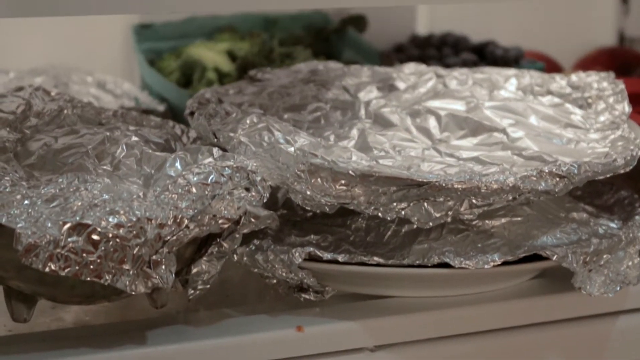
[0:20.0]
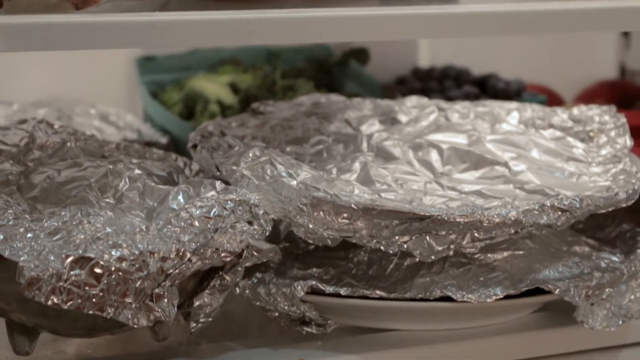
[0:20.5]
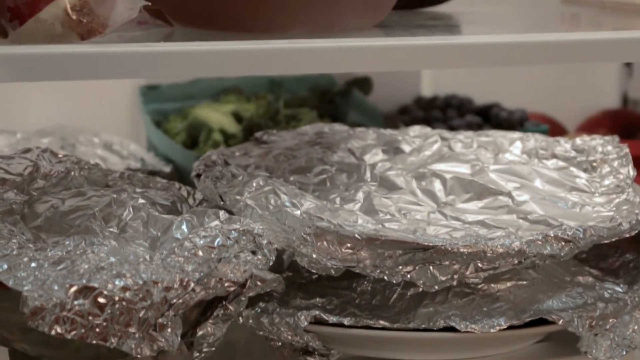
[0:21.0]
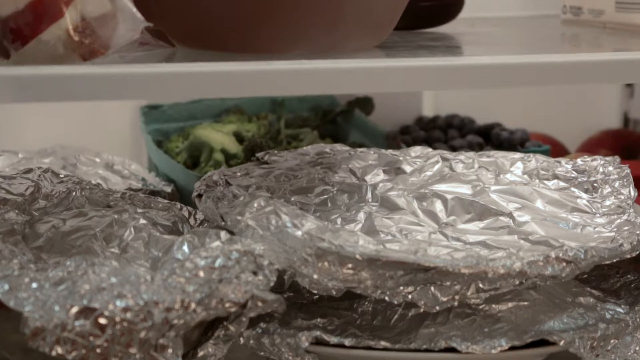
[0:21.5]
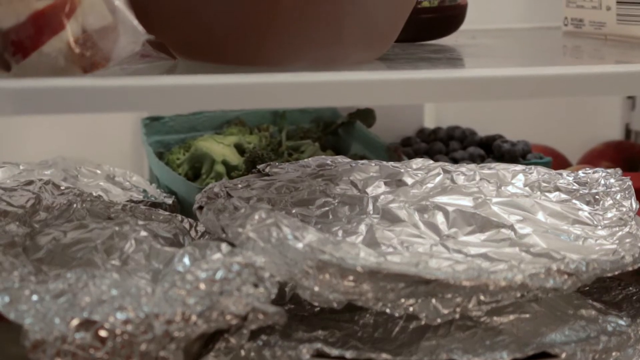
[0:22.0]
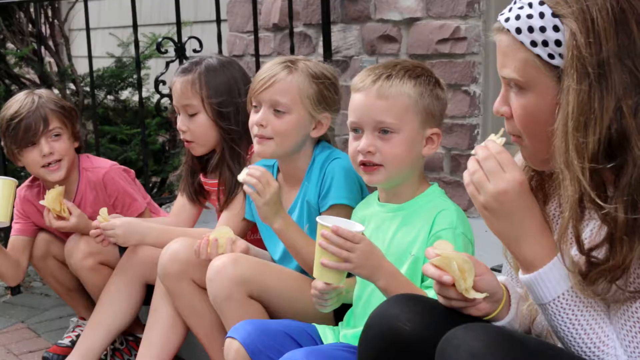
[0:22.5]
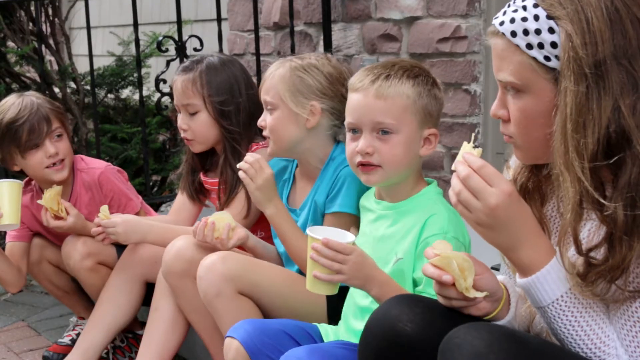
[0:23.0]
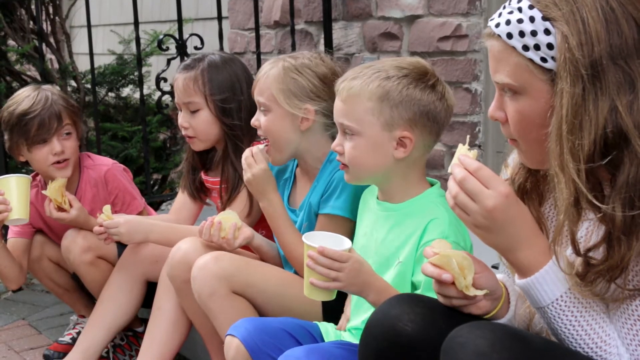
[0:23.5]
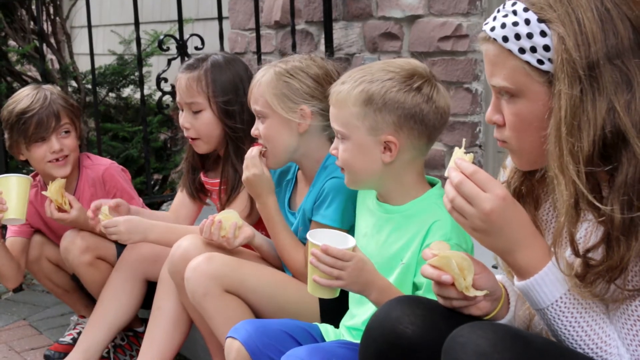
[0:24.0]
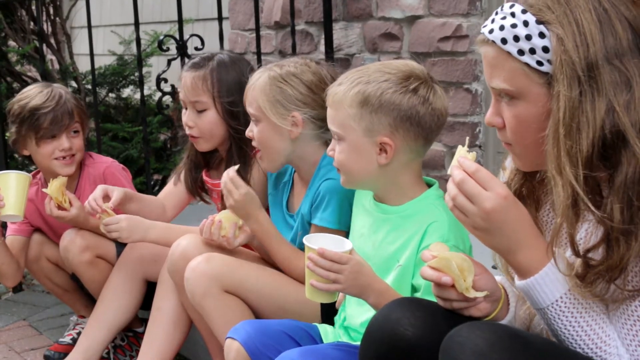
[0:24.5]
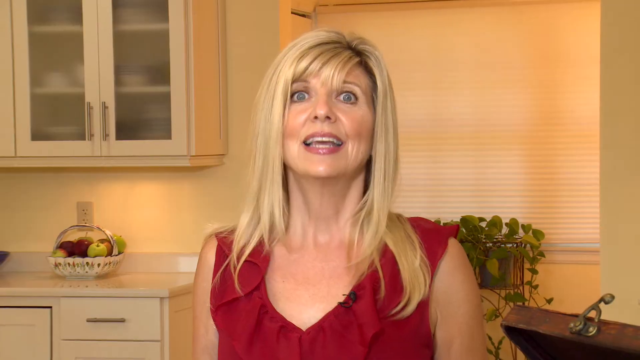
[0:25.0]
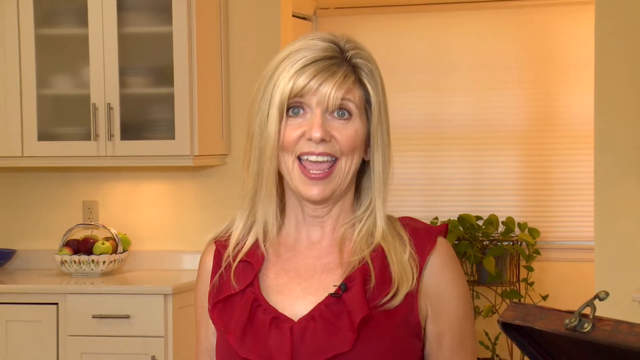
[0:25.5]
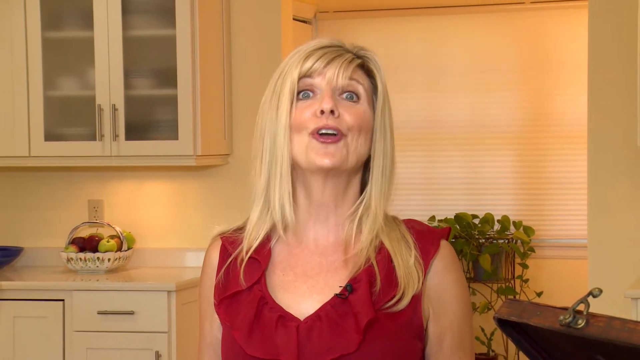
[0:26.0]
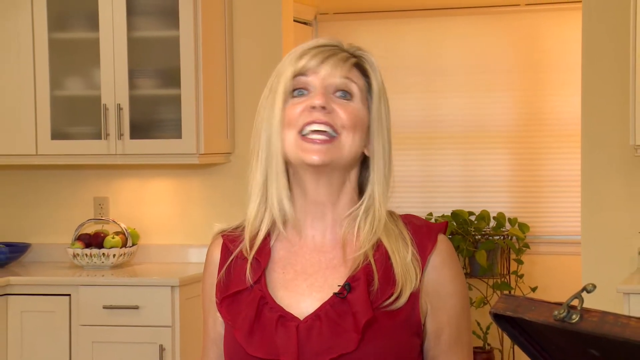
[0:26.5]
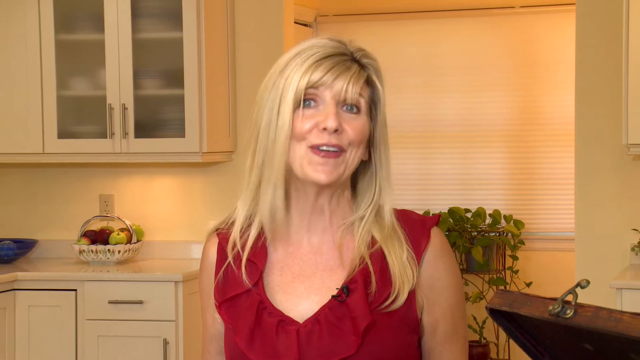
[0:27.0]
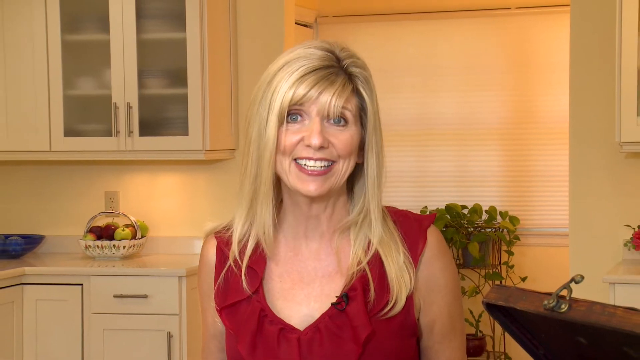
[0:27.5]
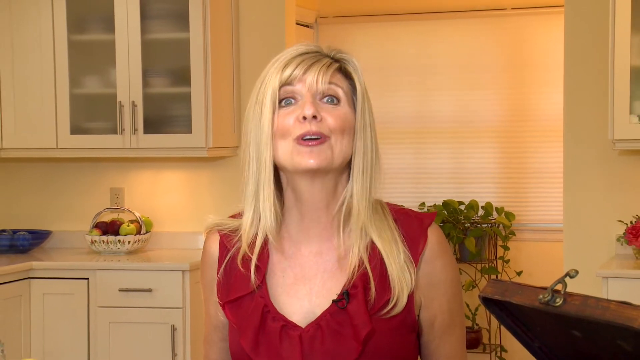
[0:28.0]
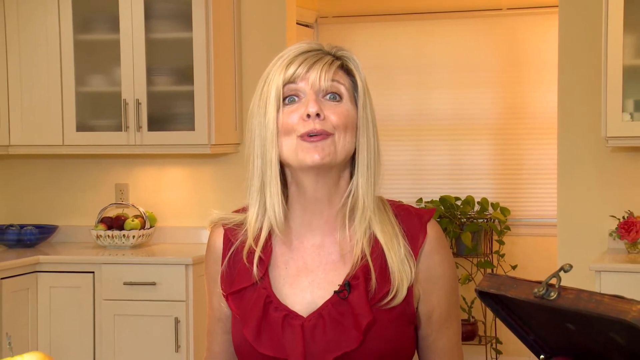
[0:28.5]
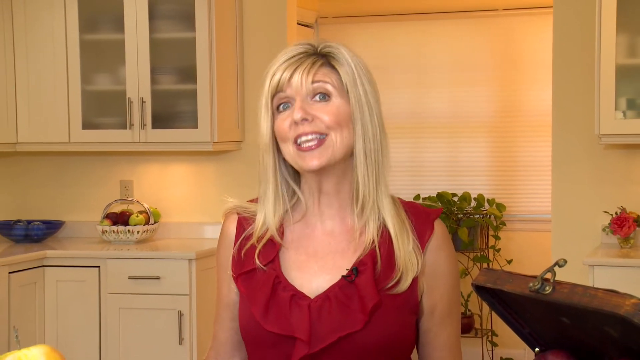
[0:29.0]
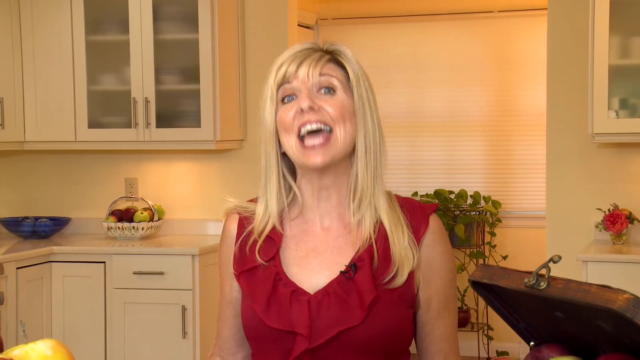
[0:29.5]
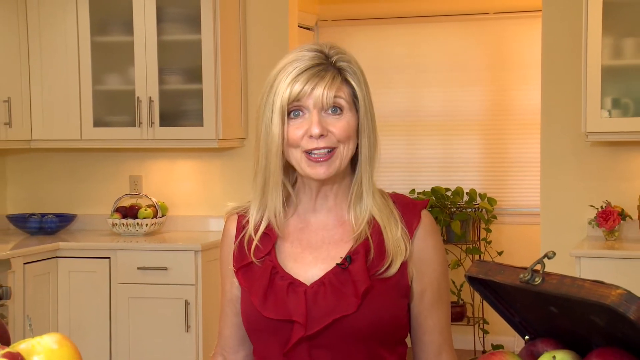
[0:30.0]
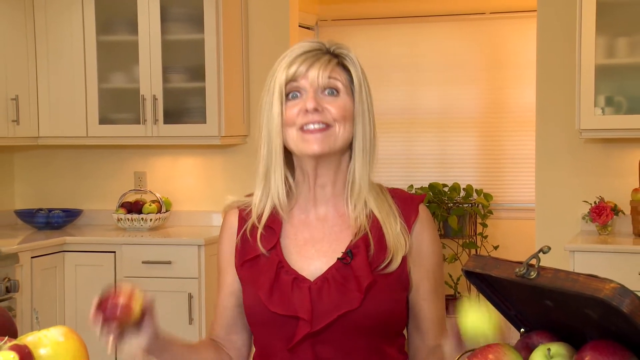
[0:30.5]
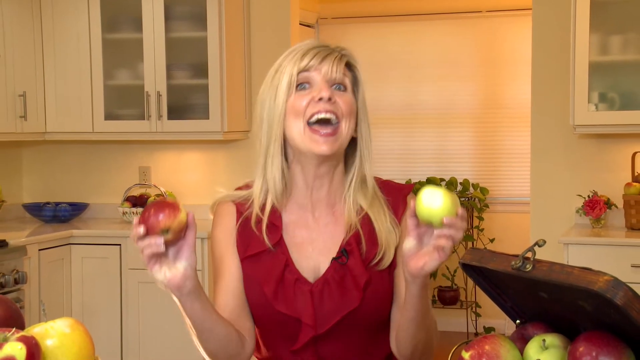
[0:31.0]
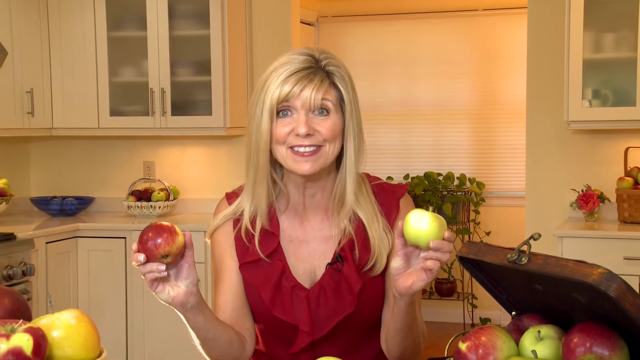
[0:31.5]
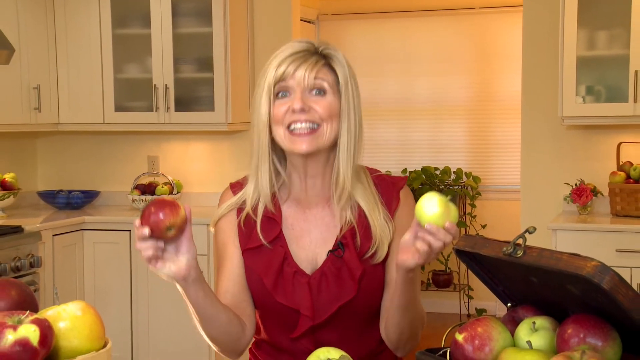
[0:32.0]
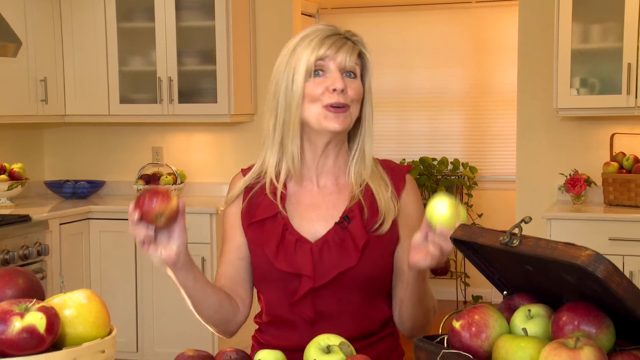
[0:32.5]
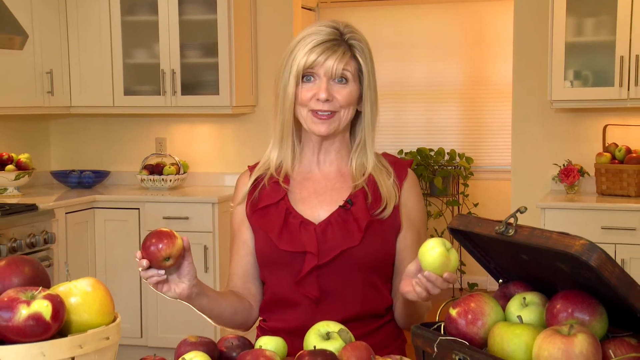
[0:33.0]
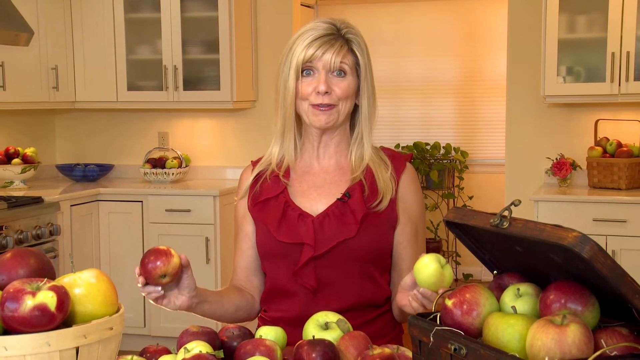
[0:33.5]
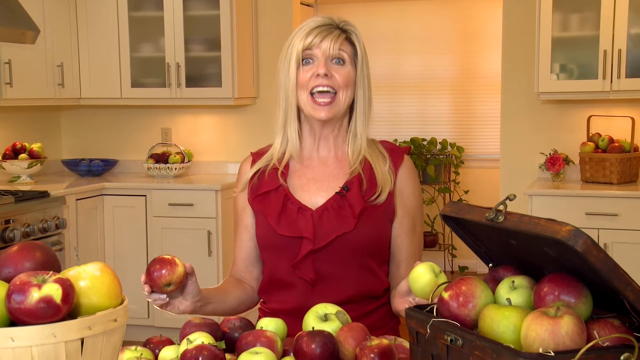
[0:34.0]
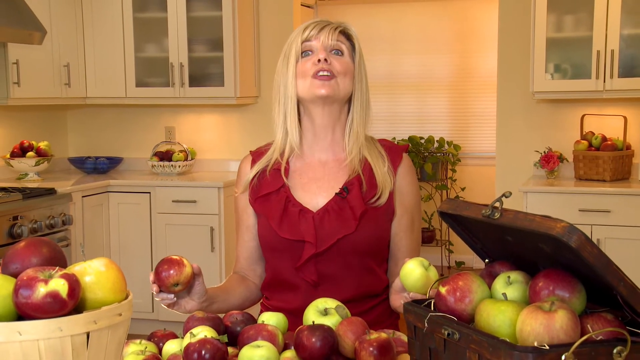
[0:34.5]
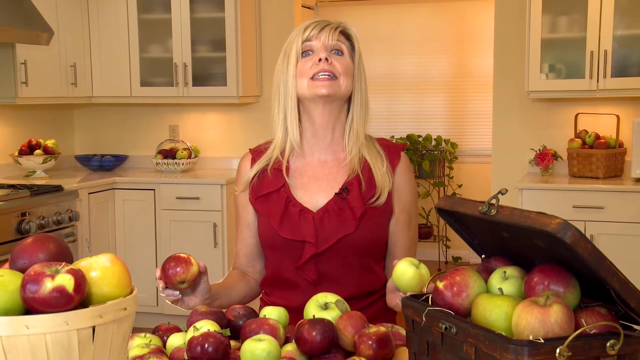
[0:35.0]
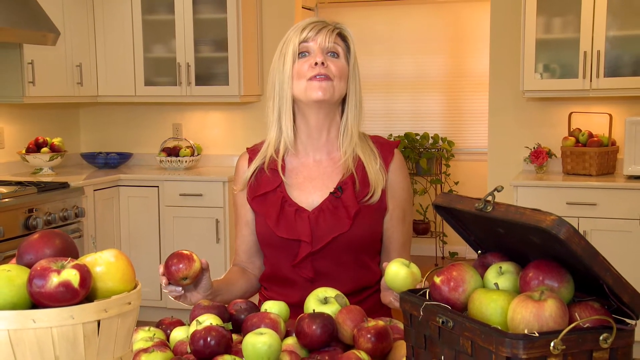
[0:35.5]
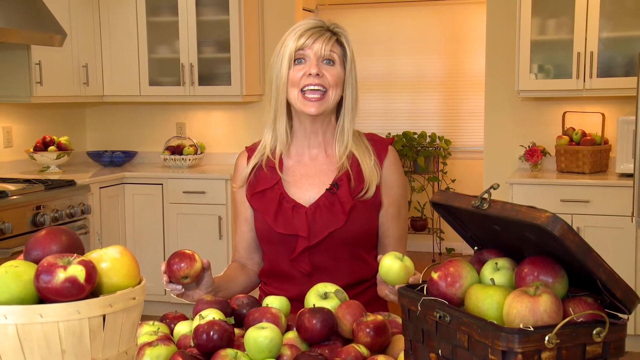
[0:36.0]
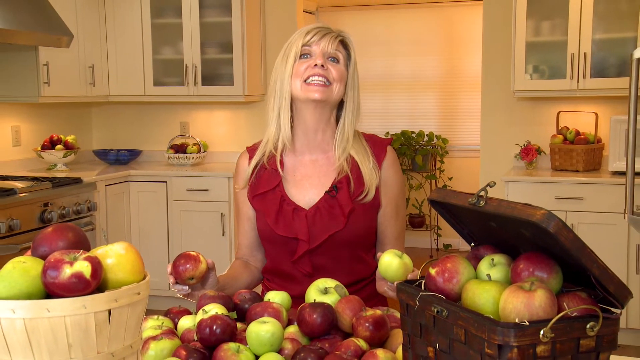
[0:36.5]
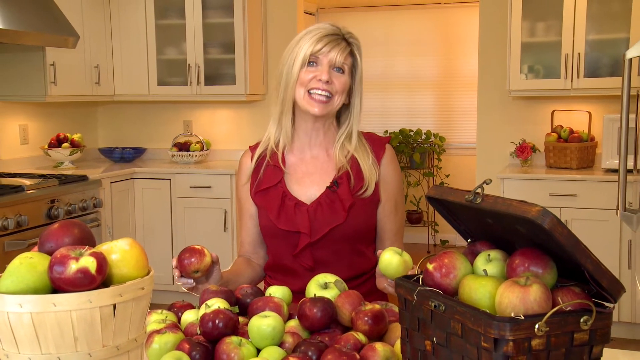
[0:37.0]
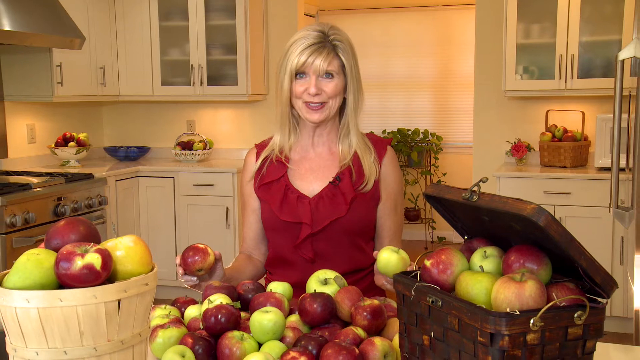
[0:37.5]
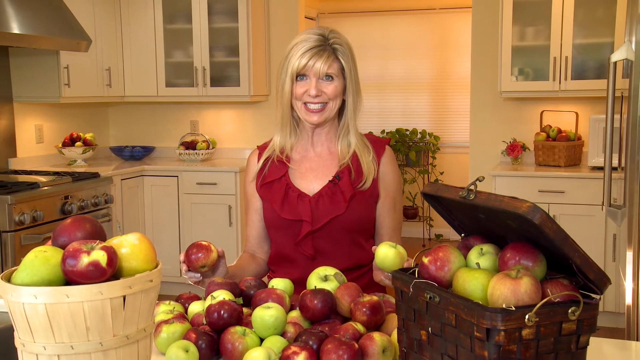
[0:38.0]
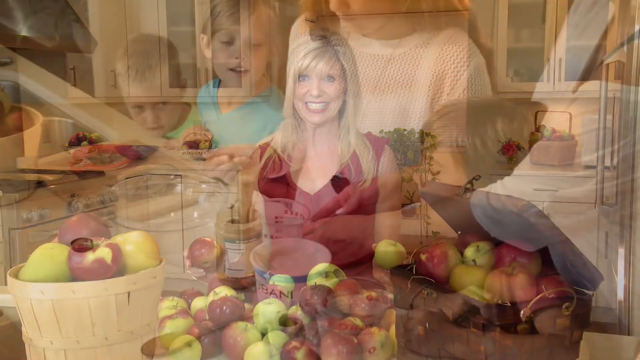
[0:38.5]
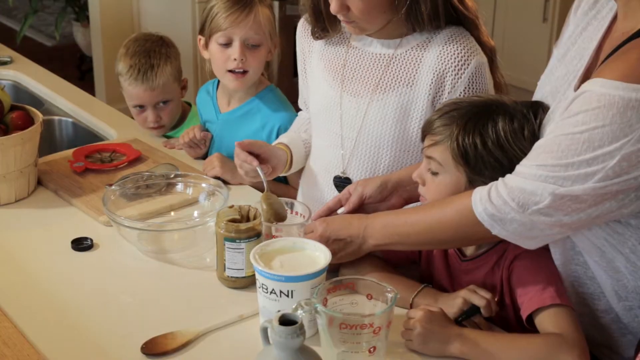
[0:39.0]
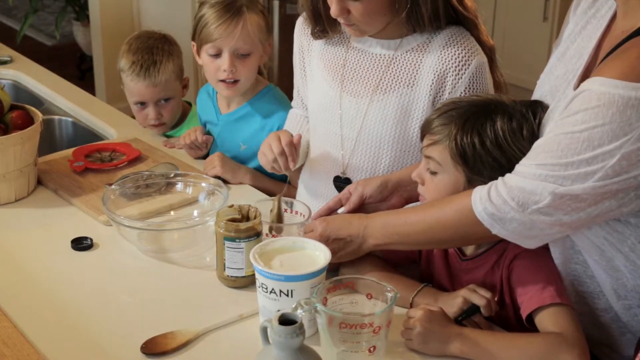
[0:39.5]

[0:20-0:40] Several plates covered in foil are stacked on top of each other in a refrigerator. The view scrolls up to the bottom of a brown wooden bowl in the refrigerator. The camera then points at five children sitting possibly on stairs or a front porch, with a wrought iron gate behind them and a brick building behind them. A child with brown hair holds a cup and speaks to the other kids. They are all holding some sort of food and eating. A girl with long brown hair looks down at what she is eating. A girl with a blue shirt and blonde hair looks at the boy who is speaking. Another boy, in a bright green shirt, holds a cup and looks straight ahead. A girl at the end, wearing a black and white polka dot headband and with long brownish blonde hair, eats something while listening to the boy. The blonde woman is then in the kitchen again, holding up two apples, one in each hand, and talking to the camera.